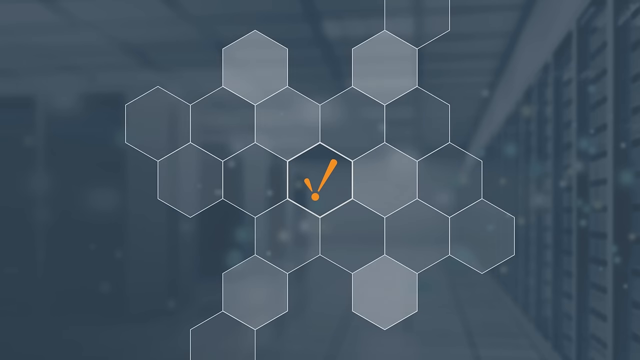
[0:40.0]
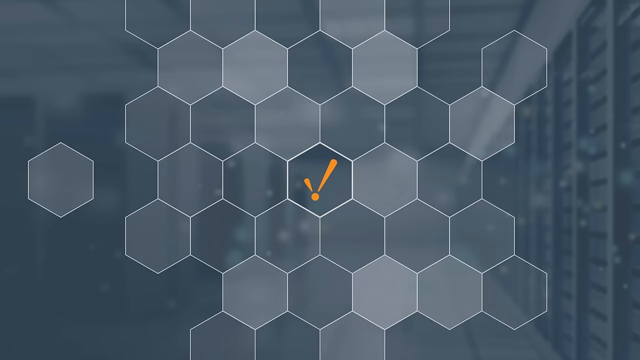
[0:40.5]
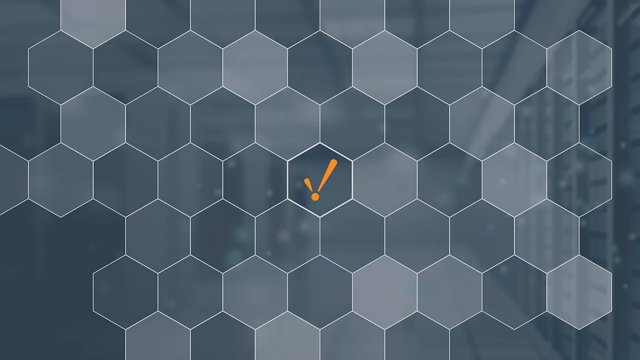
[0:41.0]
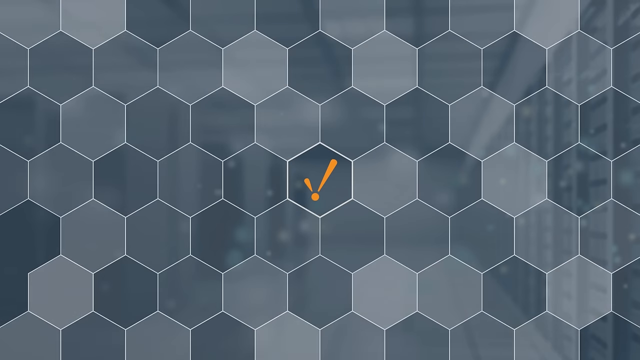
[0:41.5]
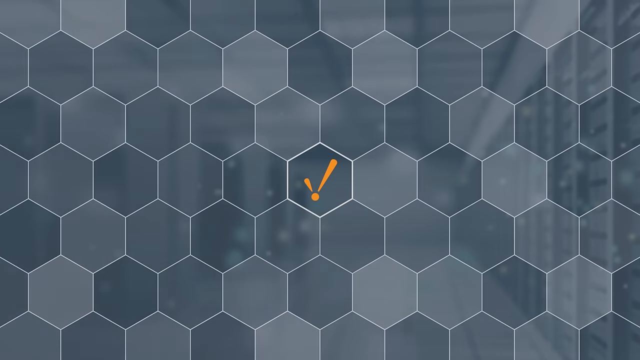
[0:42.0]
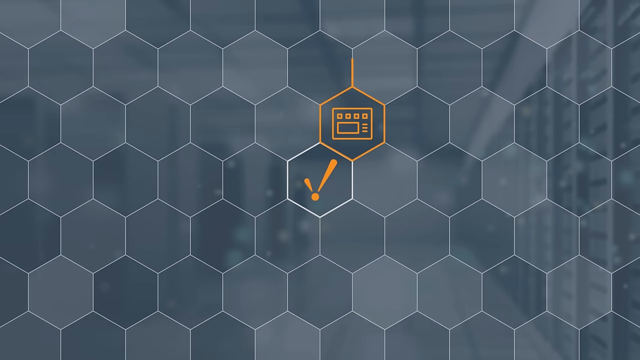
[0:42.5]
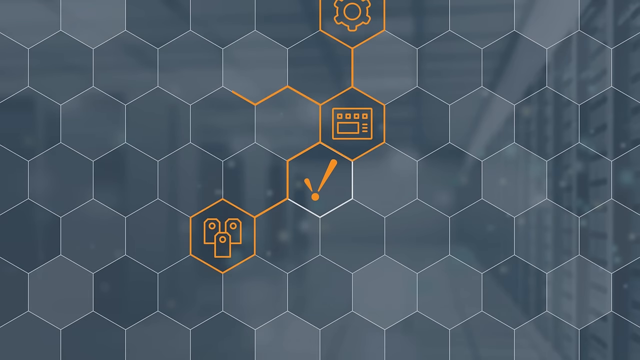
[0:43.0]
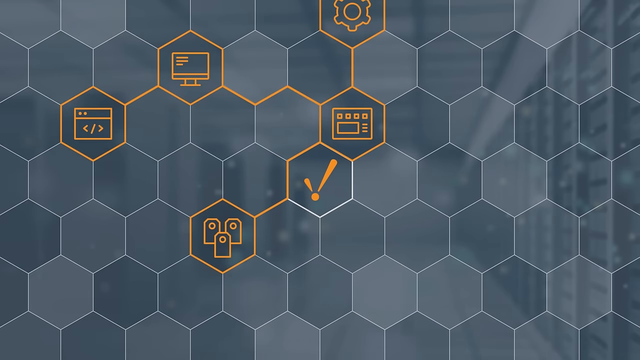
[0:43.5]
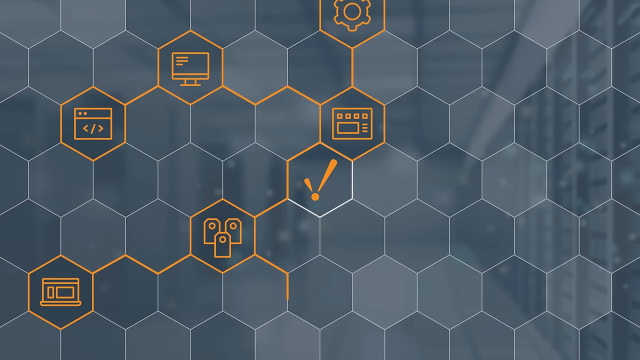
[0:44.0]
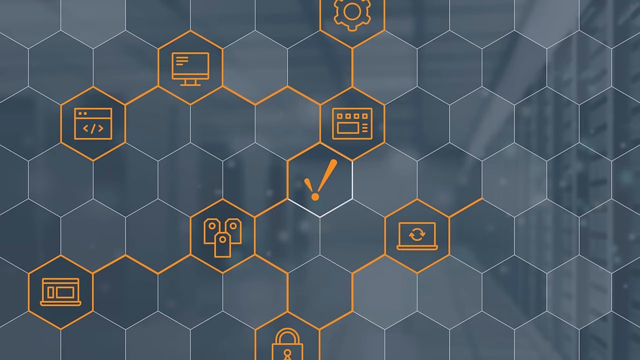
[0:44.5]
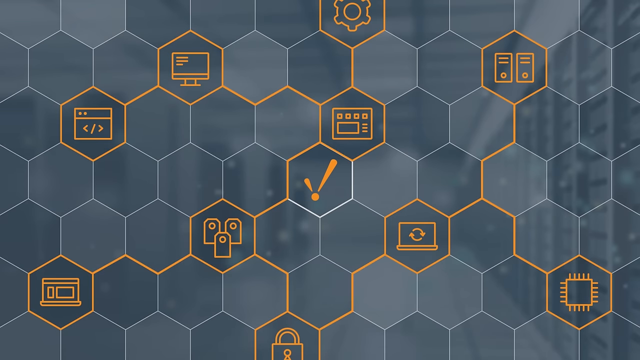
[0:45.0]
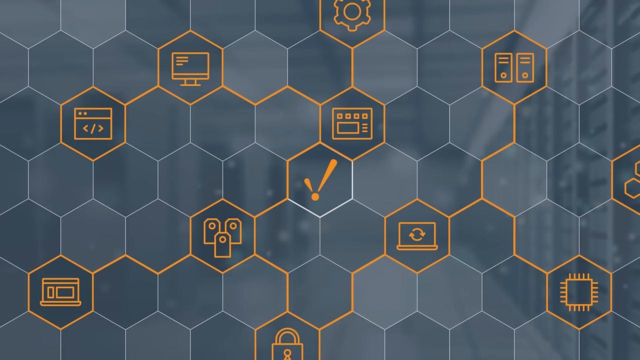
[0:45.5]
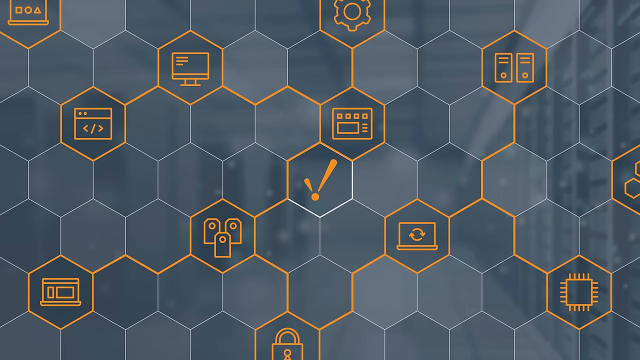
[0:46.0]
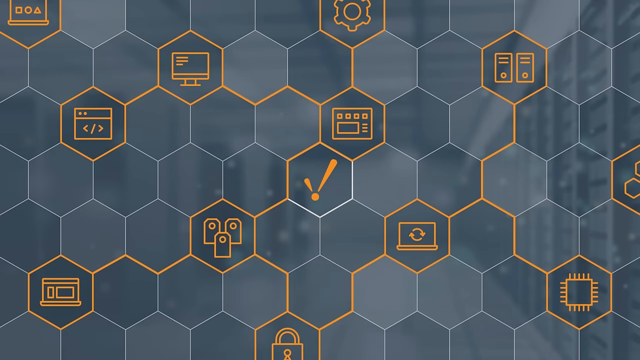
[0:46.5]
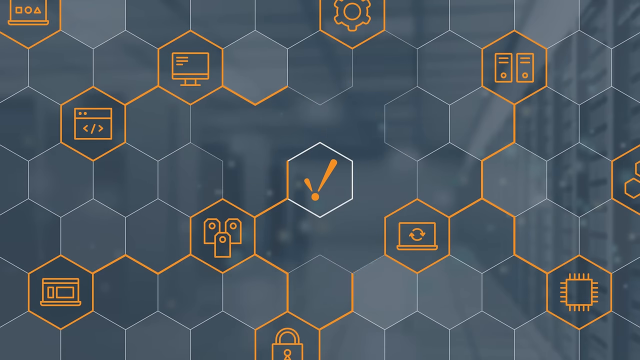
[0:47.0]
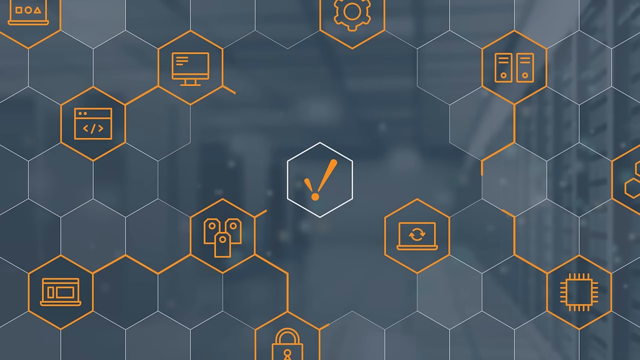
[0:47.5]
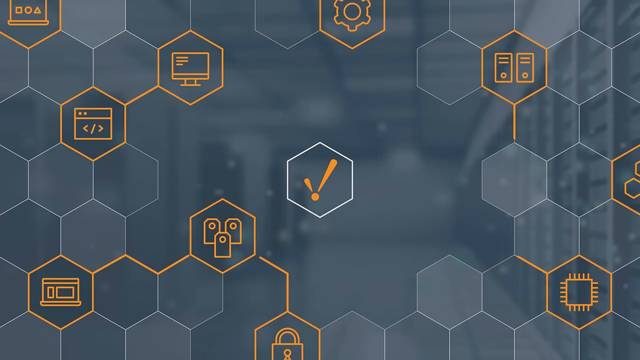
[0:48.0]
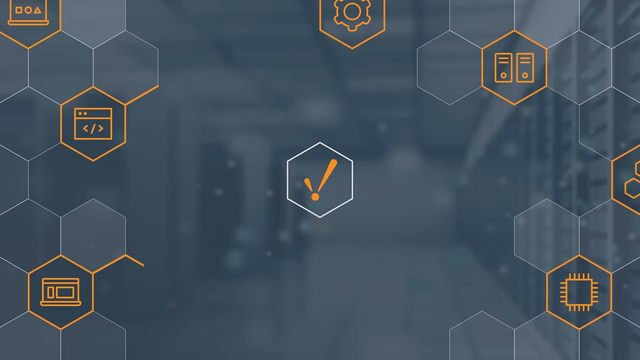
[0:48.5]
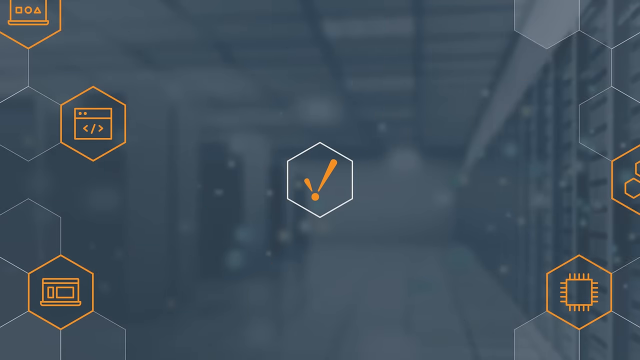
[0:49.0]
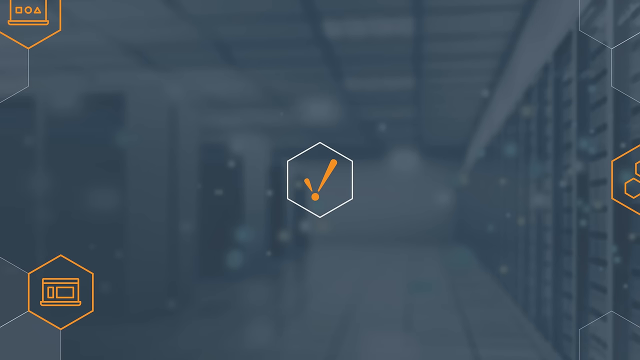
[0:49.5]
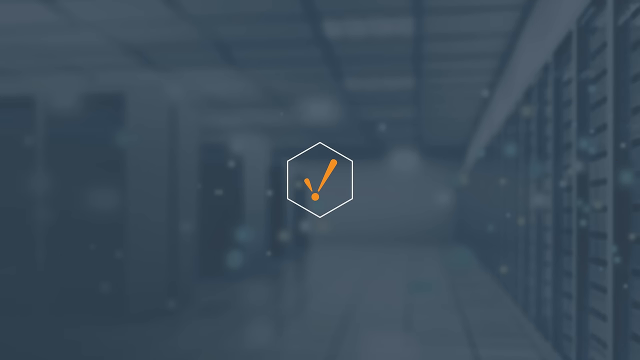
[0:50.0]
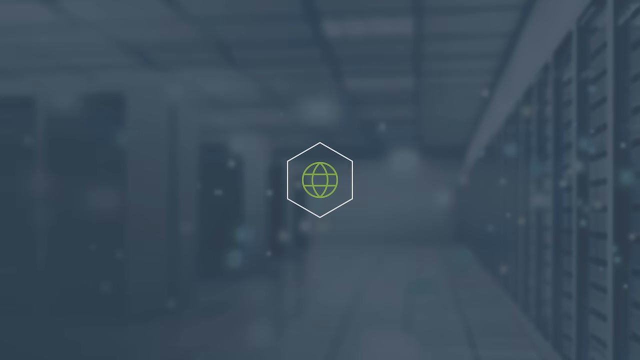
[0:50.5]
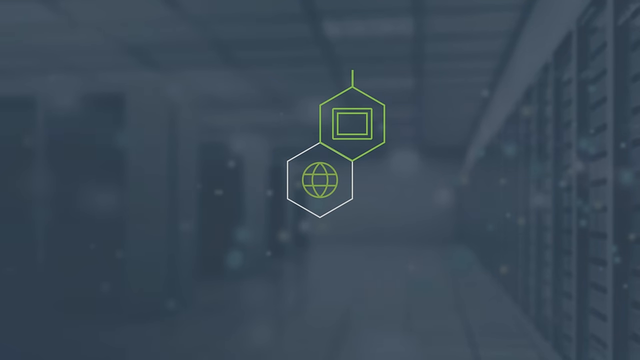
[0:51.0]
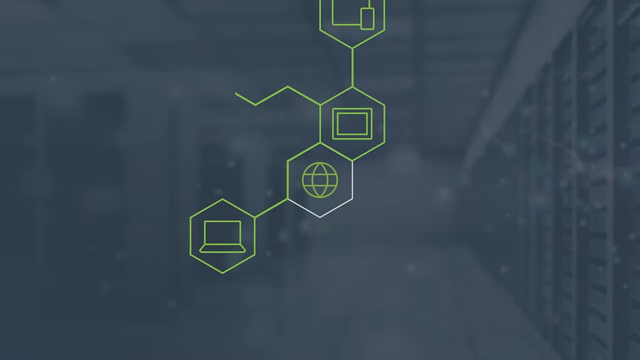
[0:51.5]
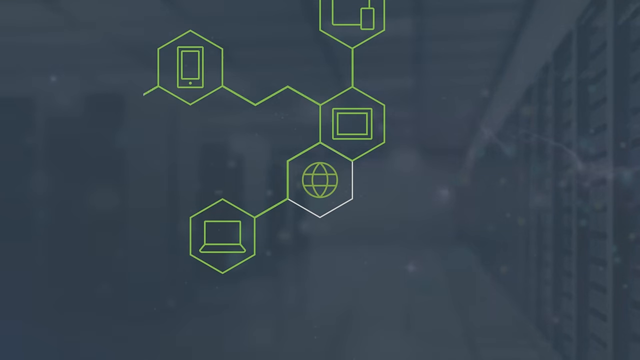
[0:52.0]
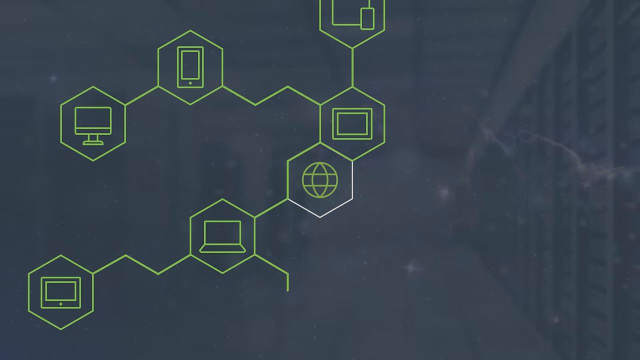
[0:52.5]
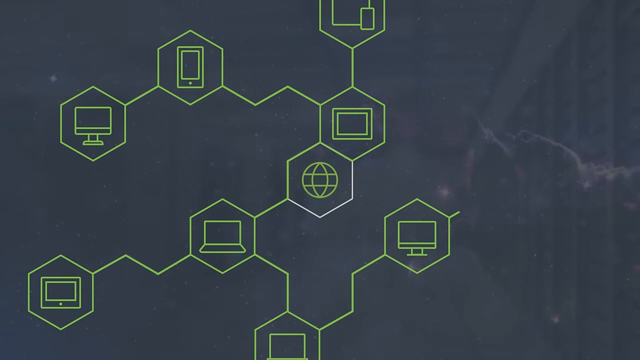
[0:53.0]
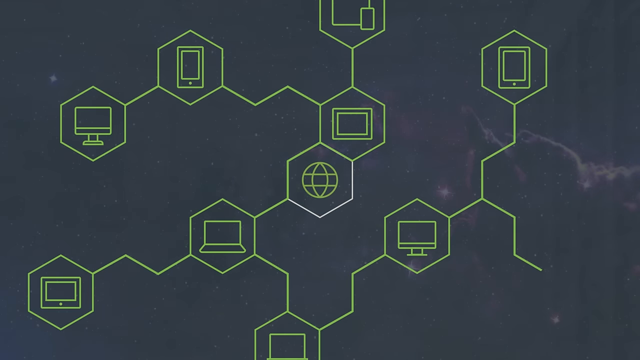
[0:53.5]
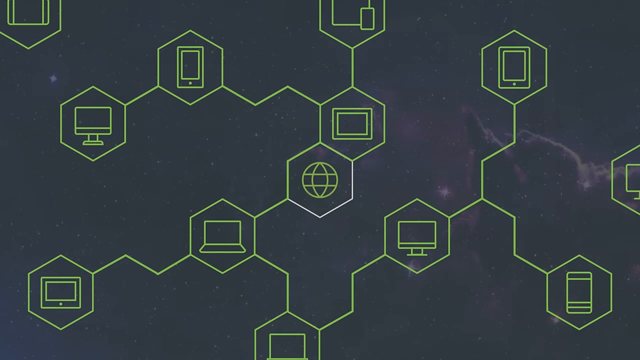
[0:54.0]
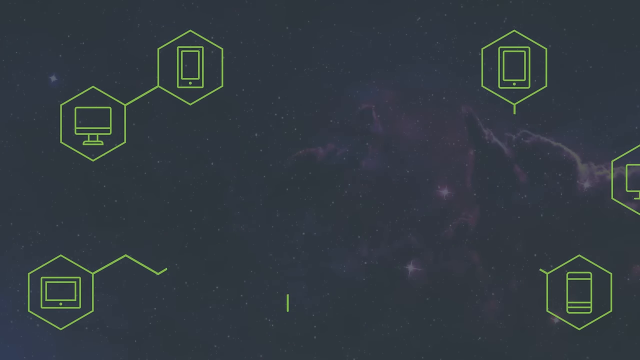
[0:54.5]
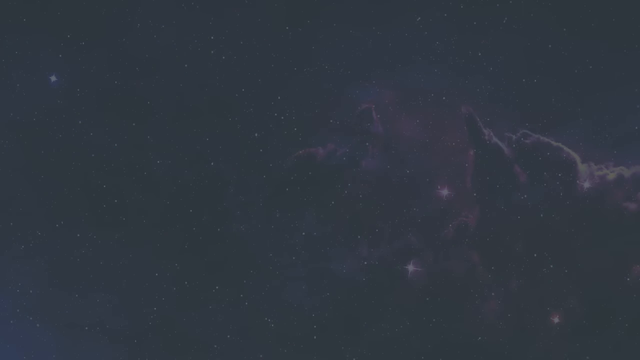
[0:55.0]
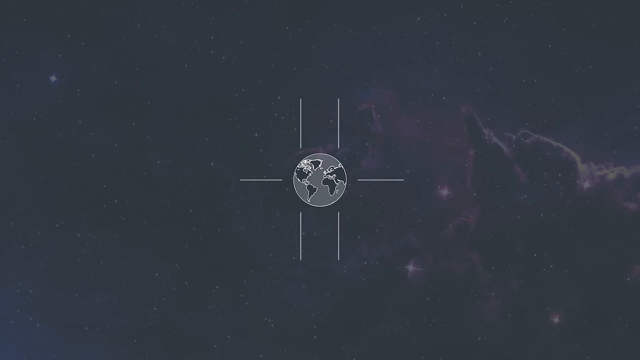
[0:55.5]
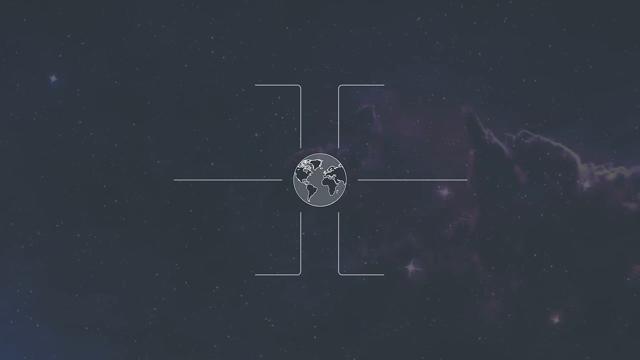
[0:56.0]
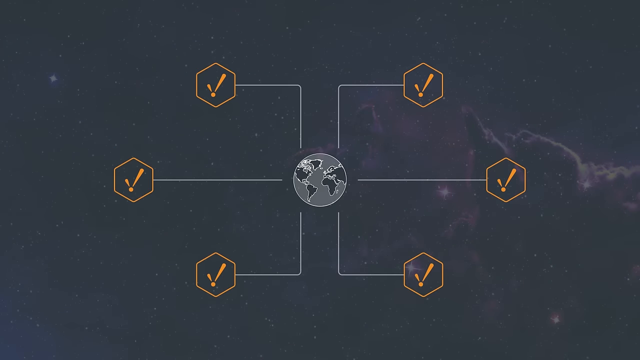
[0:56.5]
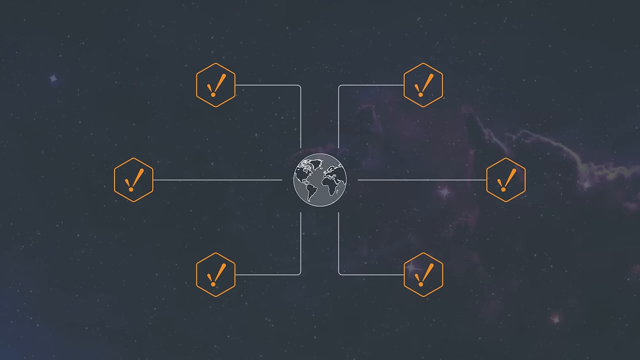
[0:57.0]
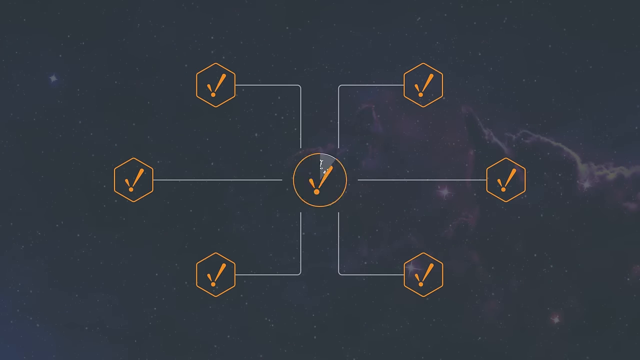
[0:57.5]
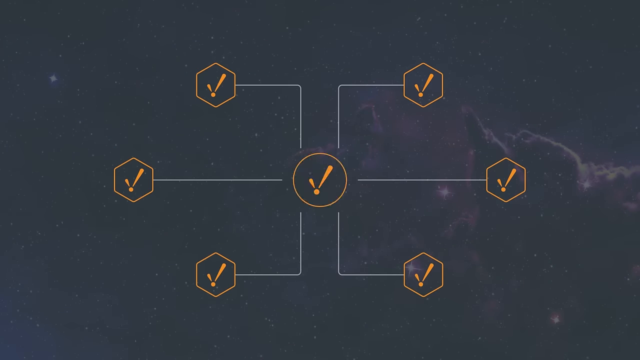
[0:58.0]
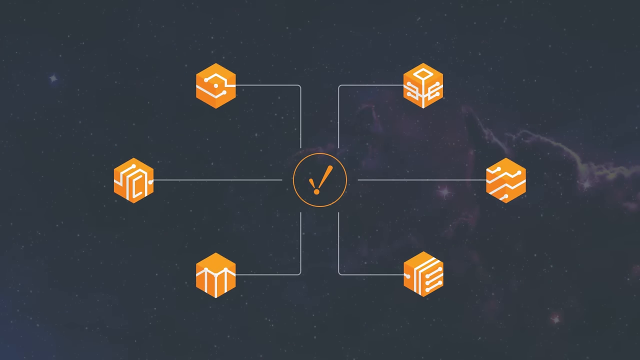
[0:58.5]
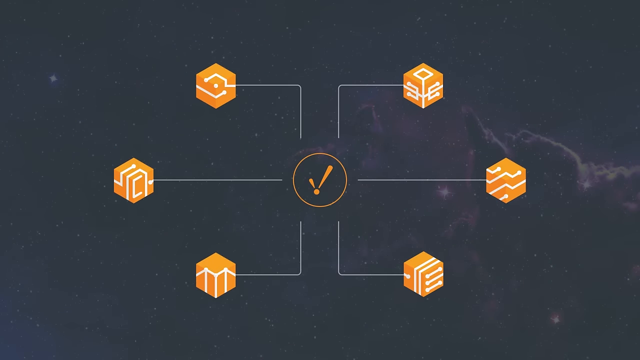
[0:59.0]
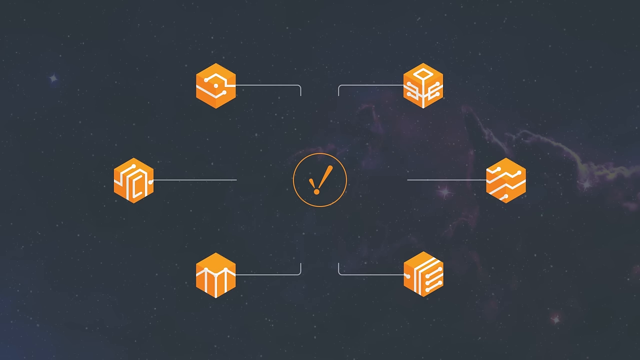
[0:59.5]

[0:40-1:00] An orange check mark branches out into hexagonal shapes that take up the entire screen, and some areas of the hexagons fill in with orange designs. More hexagonal shapes appear and connect and interweave with each other. Next come designs of computers and scientific markings scattered about: laptops, tablets and cell phones, all drawn as animated outlines rather than full figures. Green markings of these technology items then appear and connect with each other through lines before they all disappear. In the center of the screen, a globe points out to six different branches, and then all of the images turn into orange check marks.